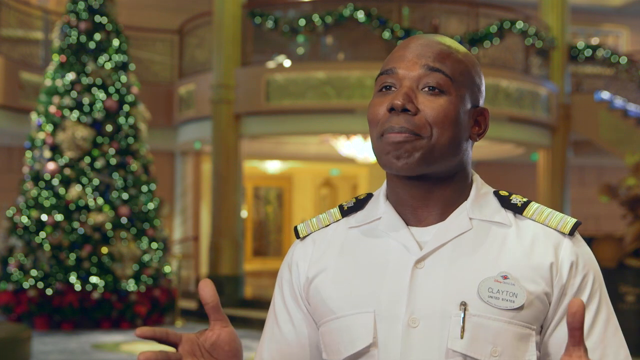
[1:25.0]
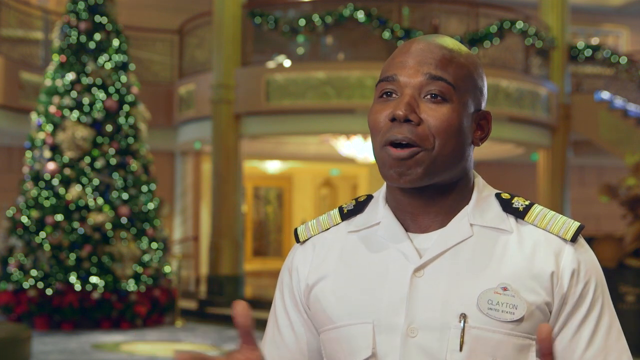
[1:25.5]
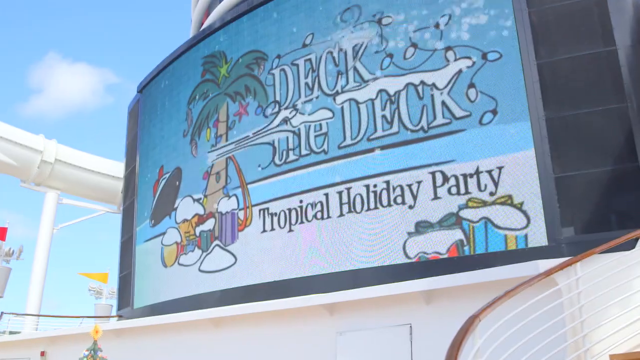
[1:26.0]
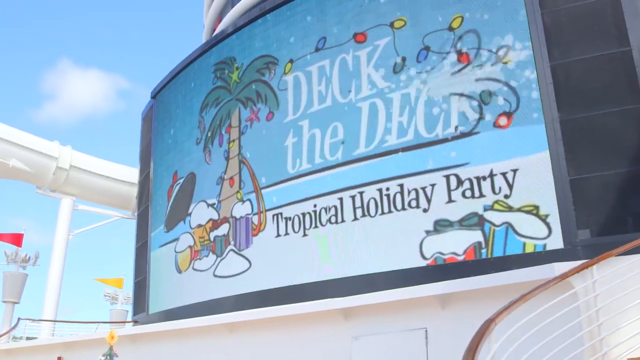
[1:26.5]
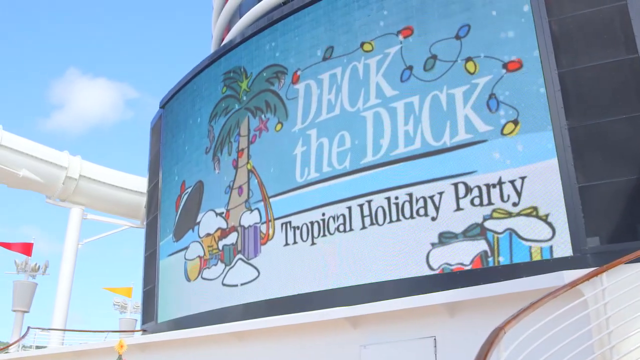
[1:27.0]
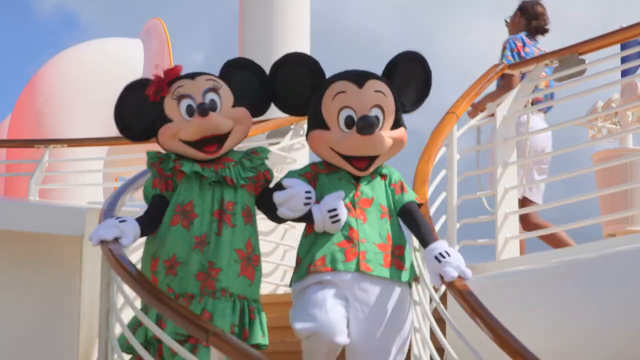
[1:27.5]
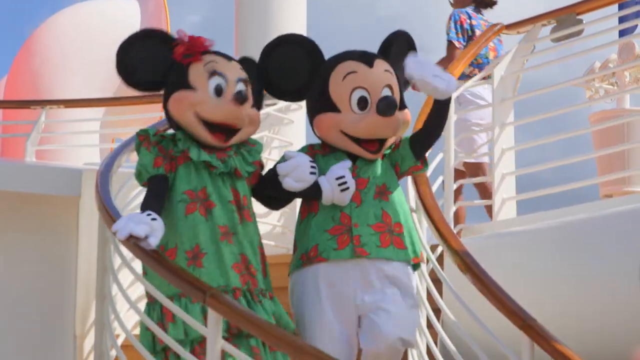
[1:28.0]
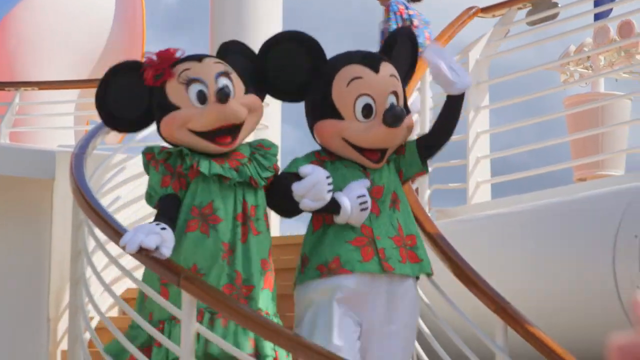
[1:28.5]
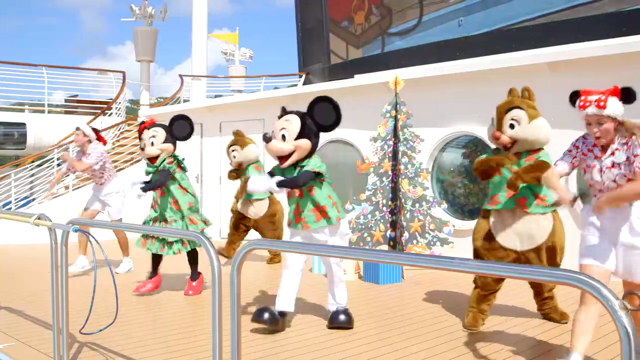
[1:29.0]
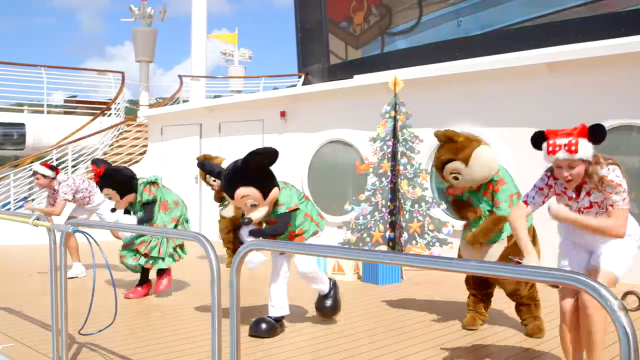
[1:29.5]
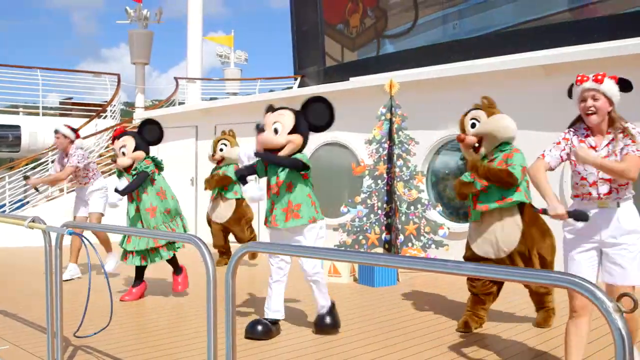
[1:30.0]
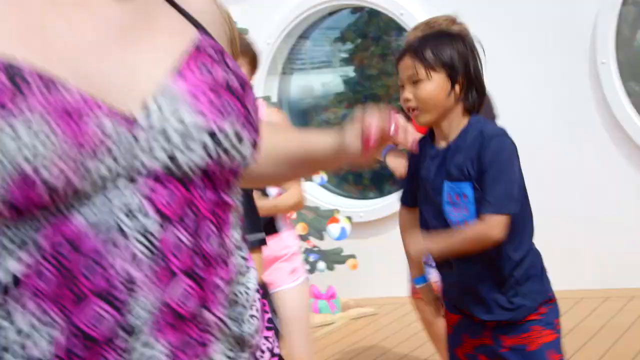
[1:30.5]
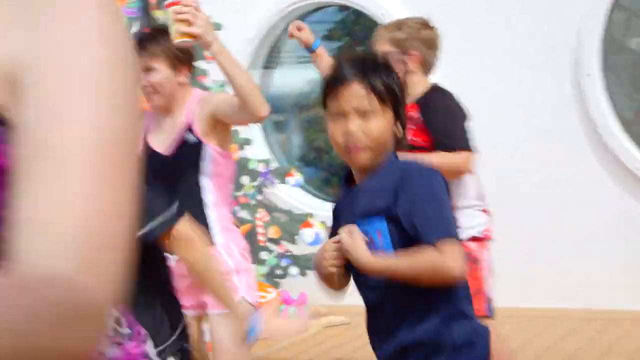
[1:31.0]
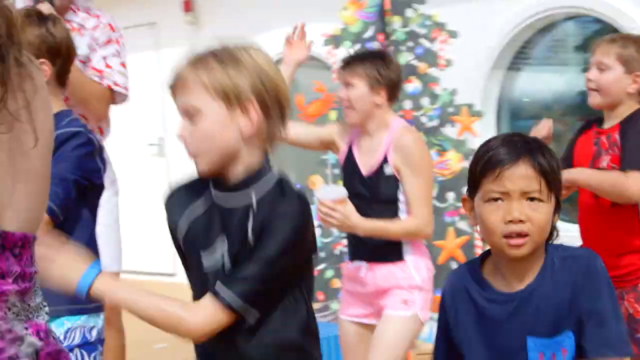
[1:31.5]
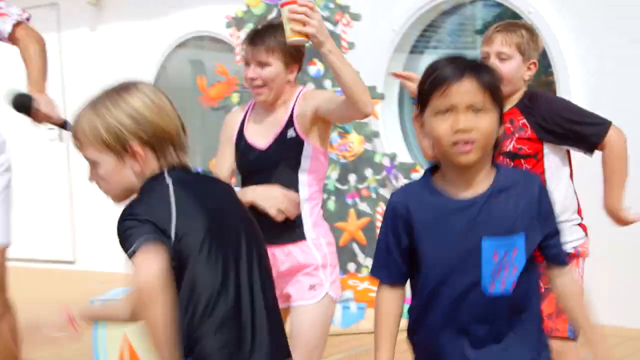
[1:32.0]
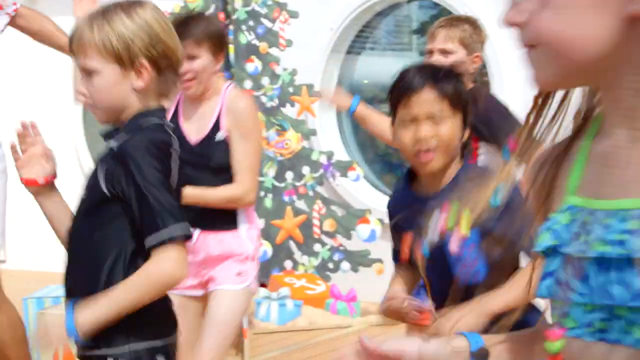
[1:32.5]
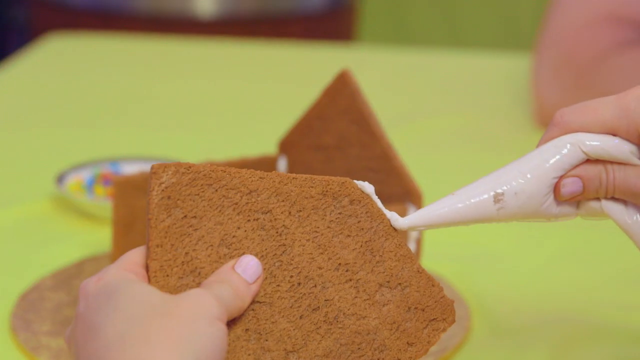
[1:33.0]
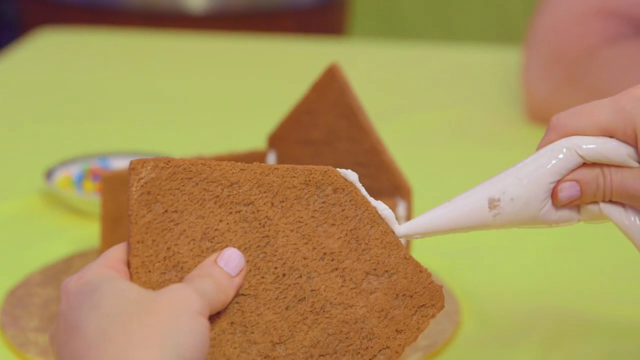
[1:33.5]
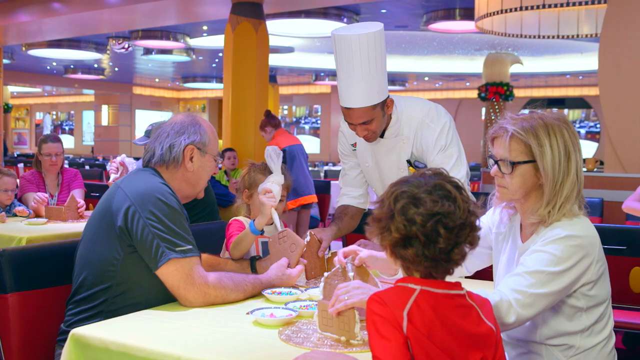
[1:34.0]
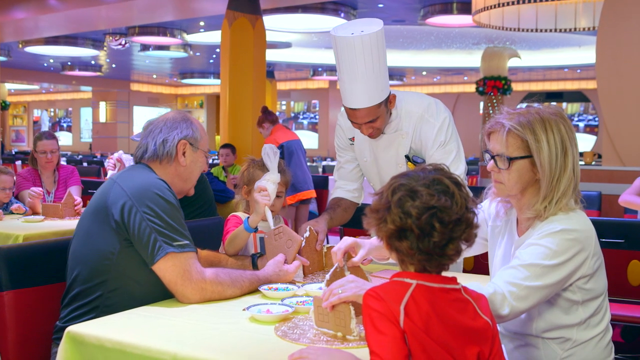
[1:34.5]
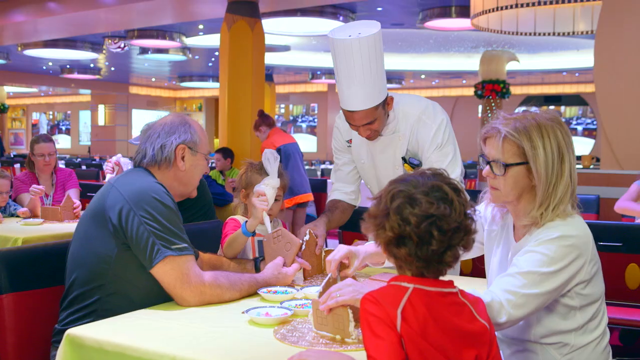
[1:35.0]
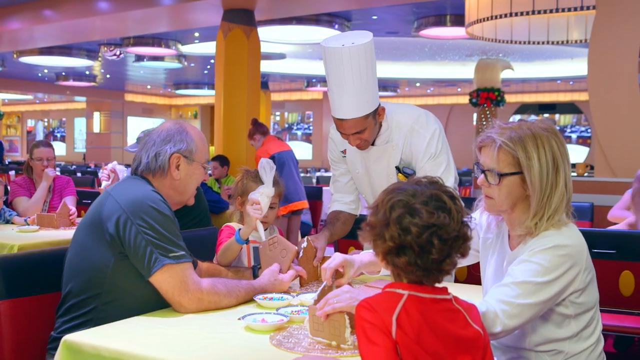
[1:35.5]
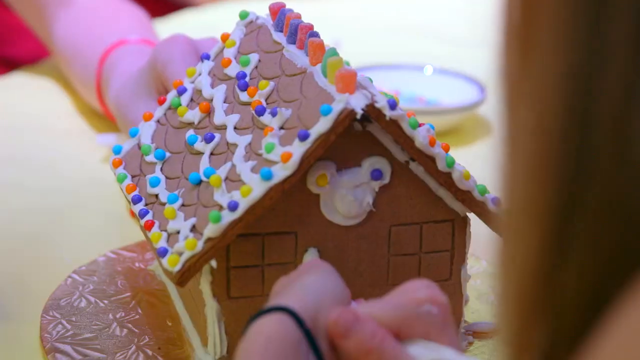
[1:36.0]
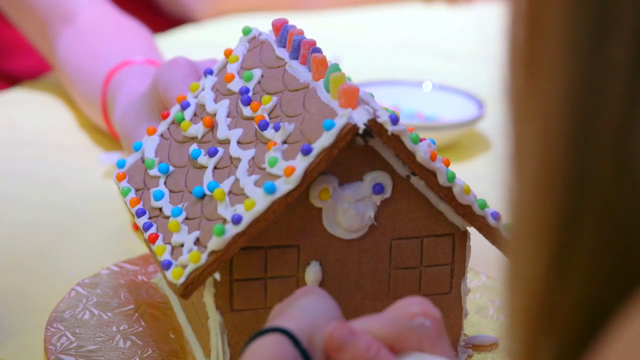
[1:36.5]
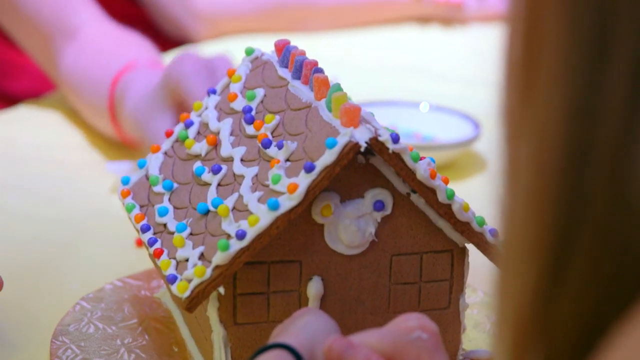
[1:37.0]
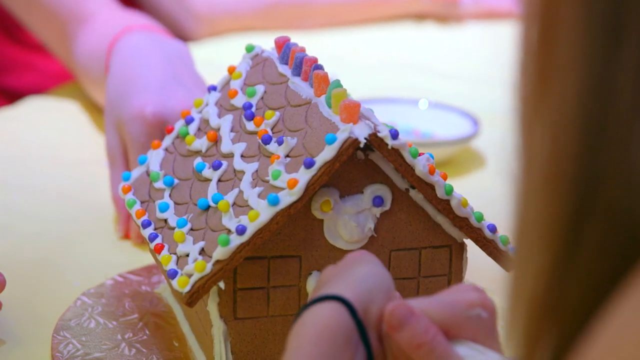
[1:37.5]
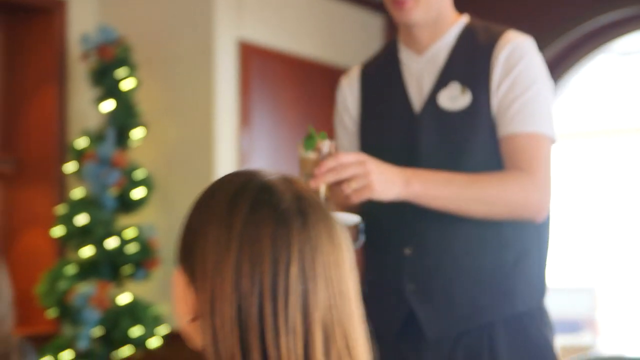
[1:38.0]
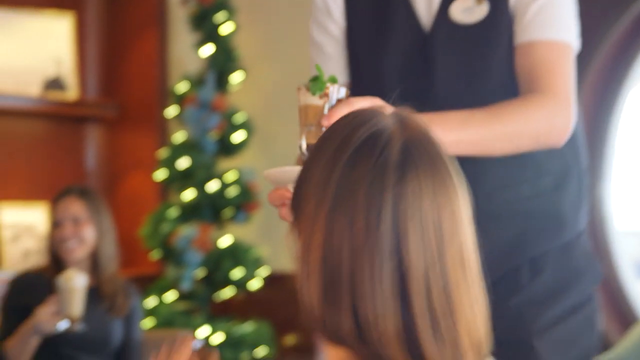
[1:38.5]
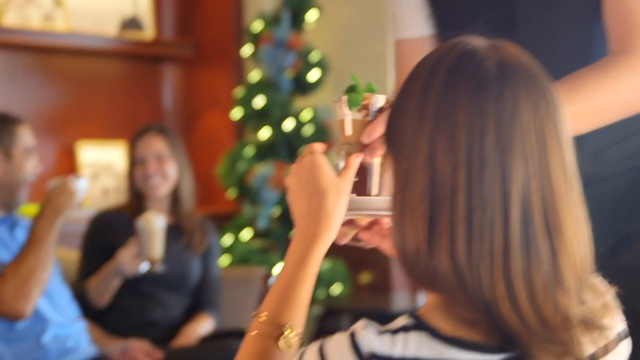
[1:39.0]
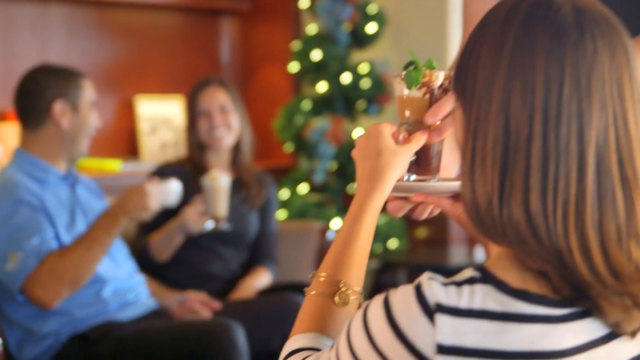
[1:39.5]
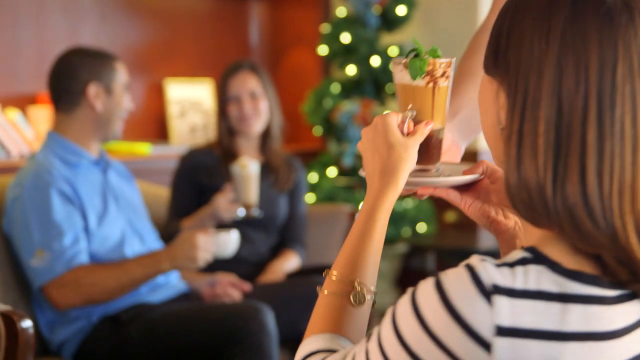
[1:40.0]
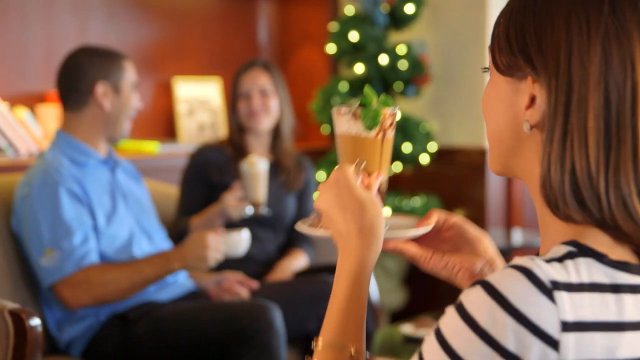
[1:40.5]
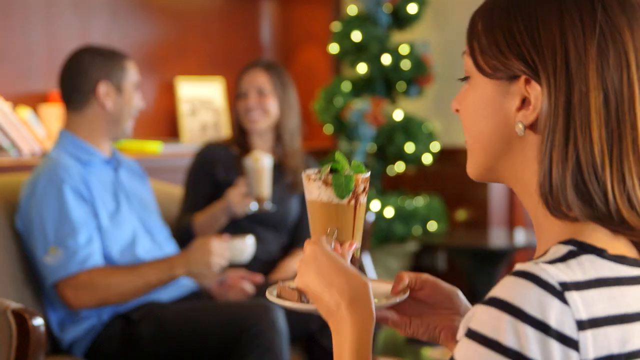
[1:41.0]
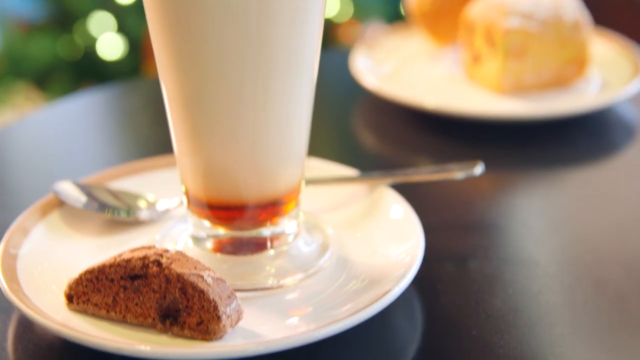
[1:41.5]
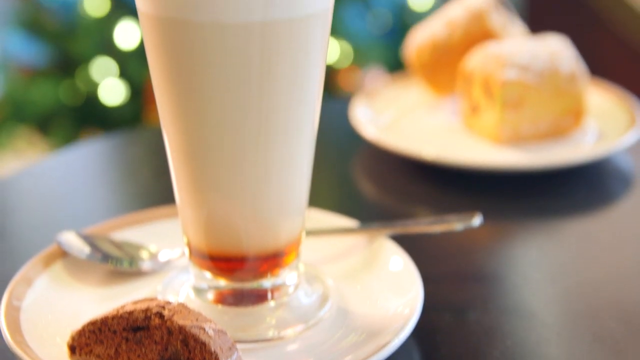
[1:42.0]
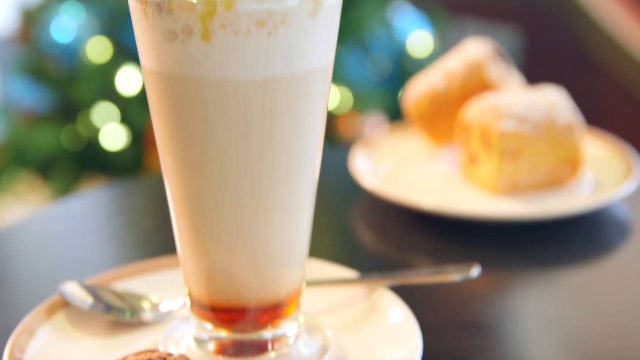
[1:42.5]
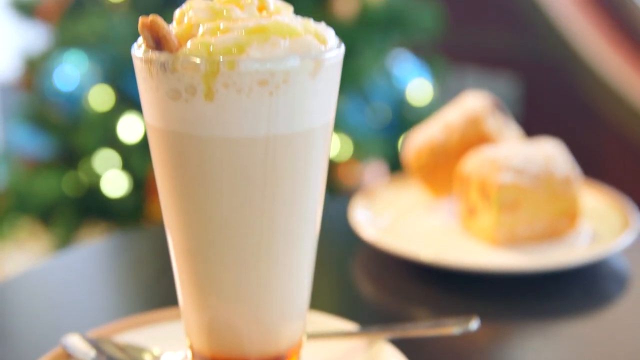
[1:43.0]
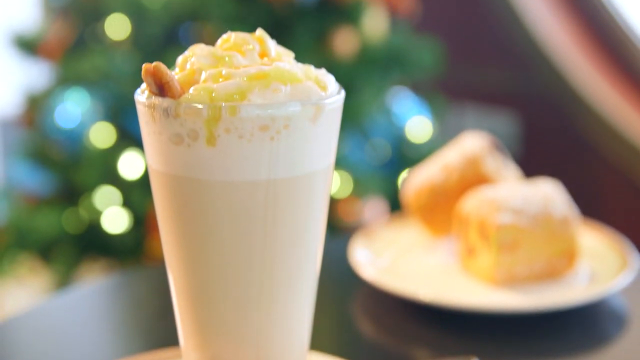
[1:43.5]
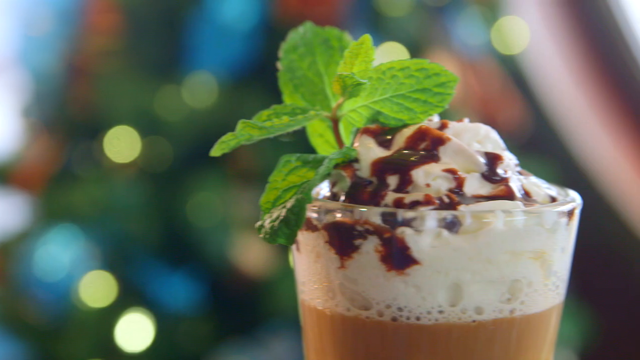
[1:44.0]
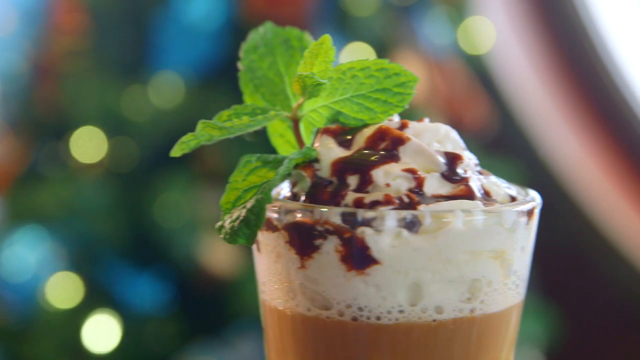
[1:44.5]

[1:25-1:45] A huge outdoor Megatron TV screen shows a cartoon picture that says "Deck the deck" with "Tropical holiday party" underneath, along with palm tree graphics lit up with lights and some presents. Mickey and Minnie Mouse come down the outside stairs in holiday but not winter attire, a green shirt and a green dress with poinsettias on them, and then dance on the outdoor deck. Mickey, Minnie, and Chip and Dale, also in similar green shirts with poinsettias, dance along with two dancers wearing Santa hats who roll their arms around, and lots of children dance and have fun with their parents on the deck. People then make gingerbread houses, children with their parents' help, in what looks like the dining room, with a chef overlooking them who is kind of helping to put the gingerbread houses together. The completed gingerbread houses are shown with goodies and candy on them. Some adults enjoy hot beverages.